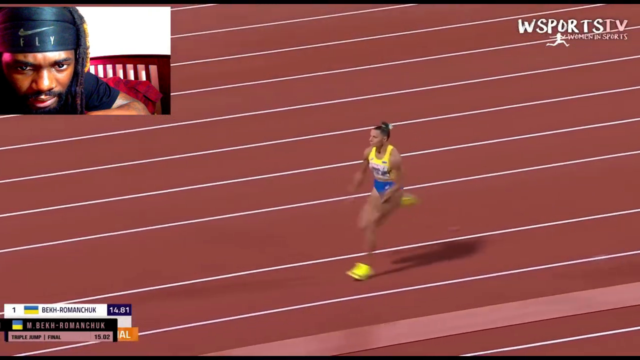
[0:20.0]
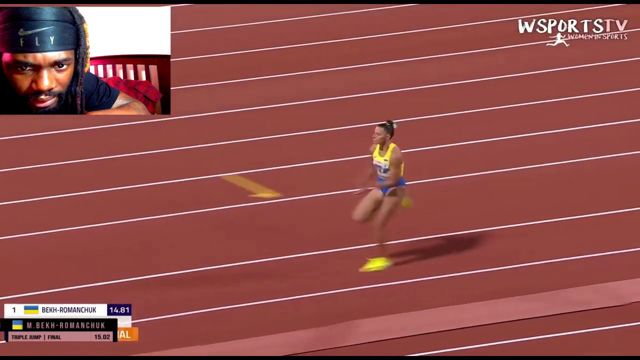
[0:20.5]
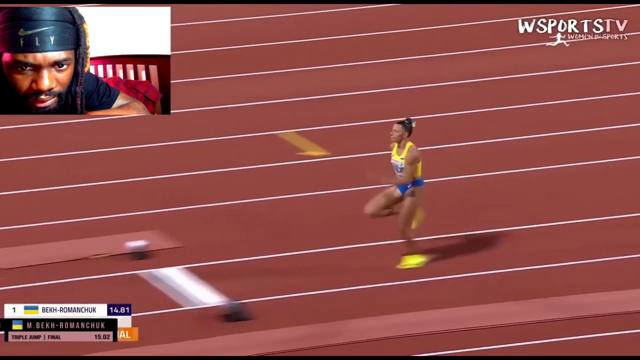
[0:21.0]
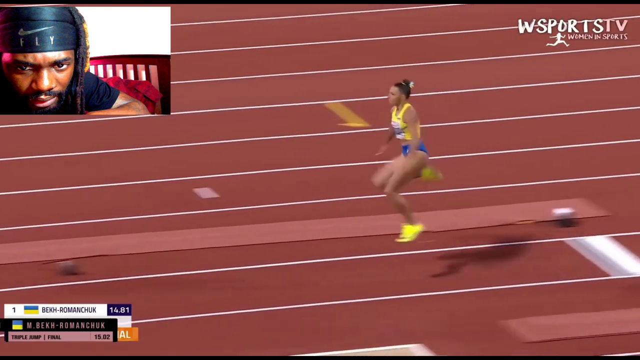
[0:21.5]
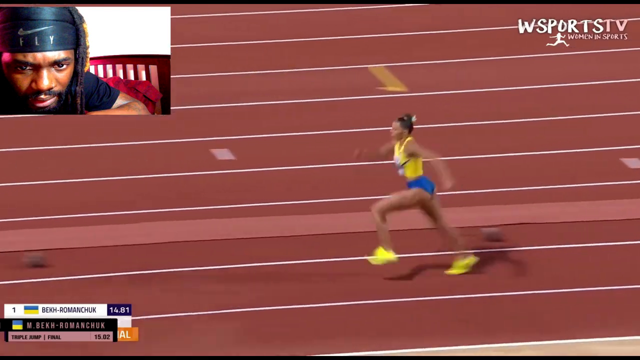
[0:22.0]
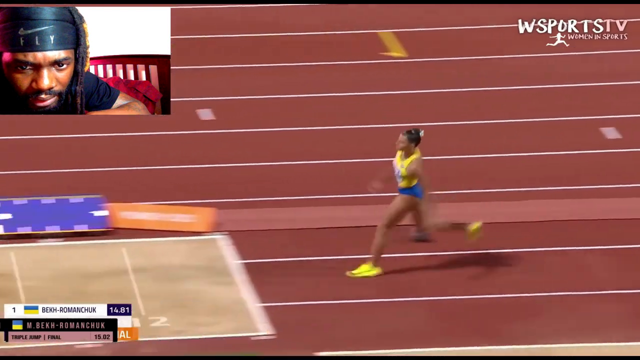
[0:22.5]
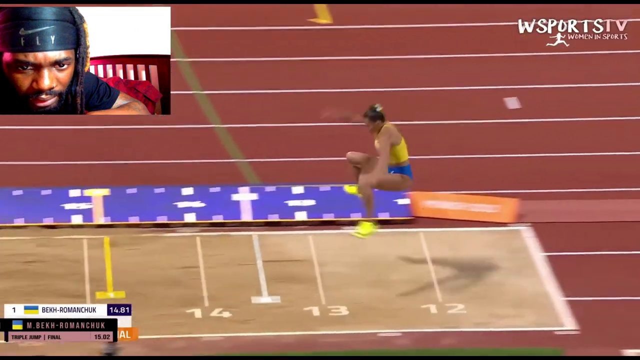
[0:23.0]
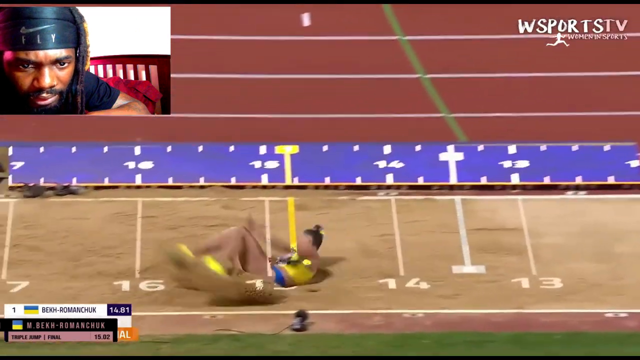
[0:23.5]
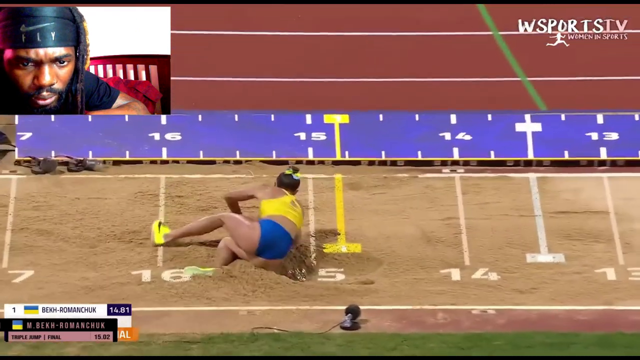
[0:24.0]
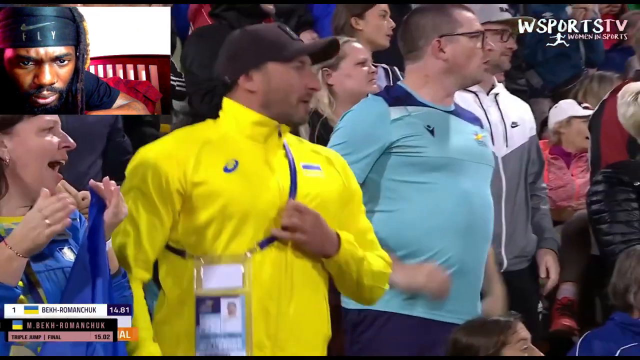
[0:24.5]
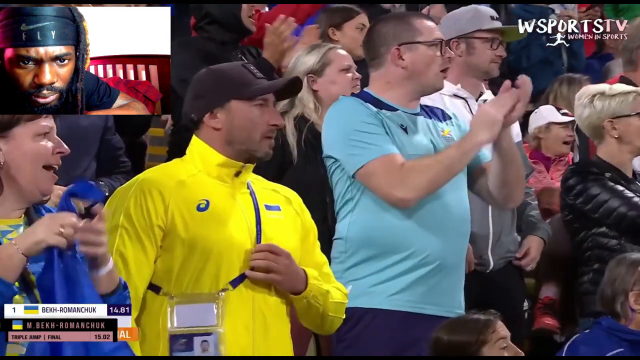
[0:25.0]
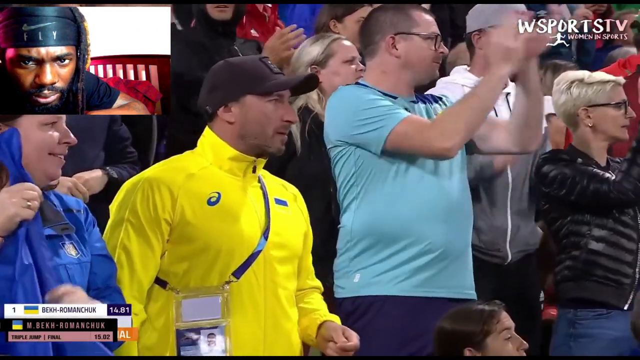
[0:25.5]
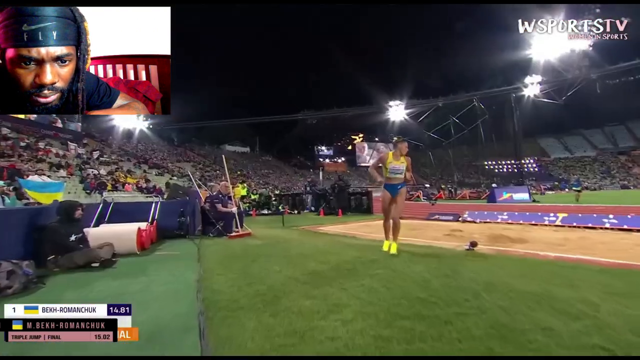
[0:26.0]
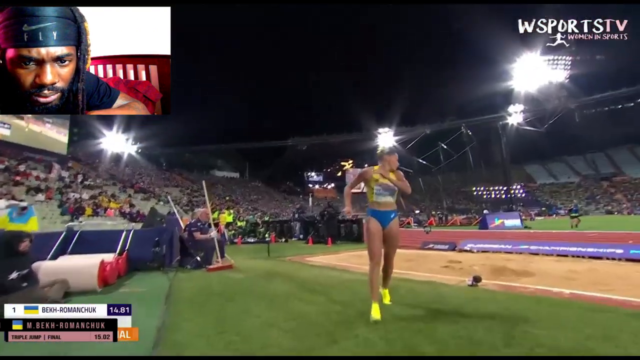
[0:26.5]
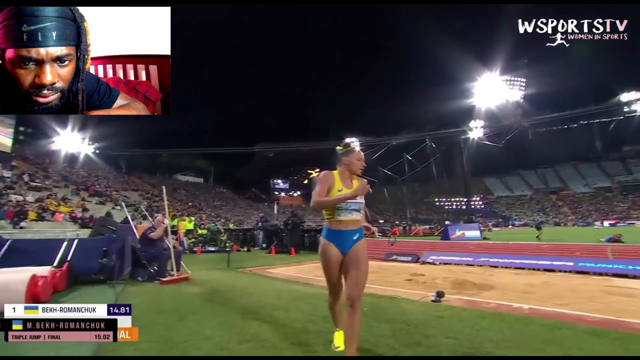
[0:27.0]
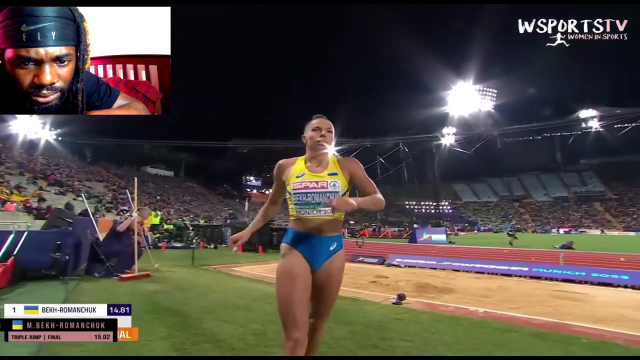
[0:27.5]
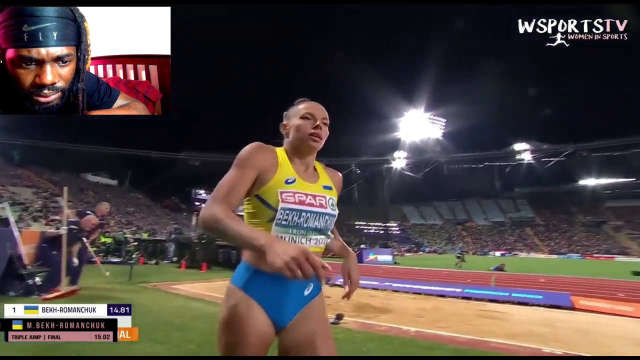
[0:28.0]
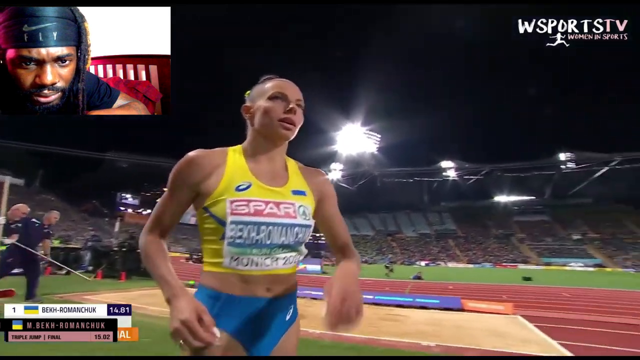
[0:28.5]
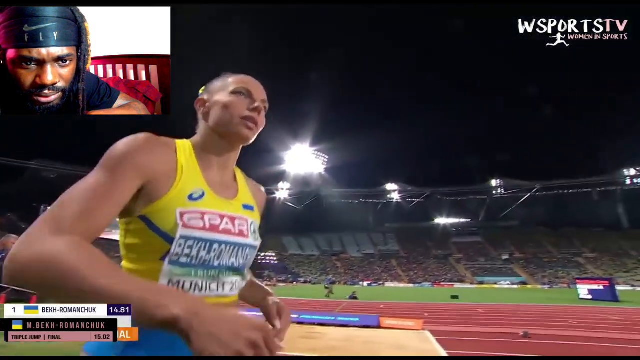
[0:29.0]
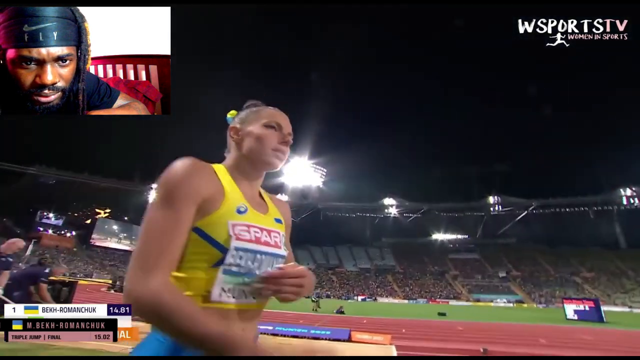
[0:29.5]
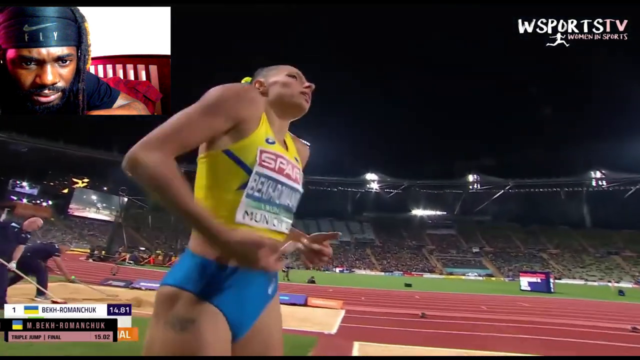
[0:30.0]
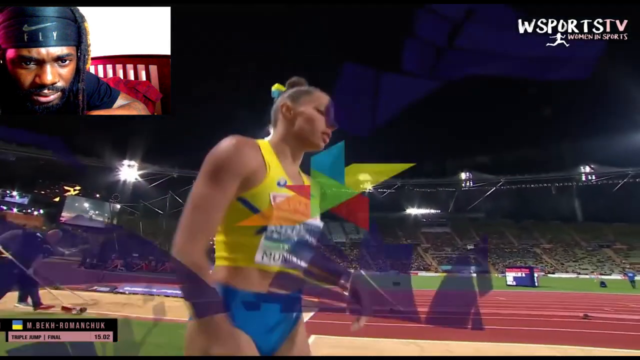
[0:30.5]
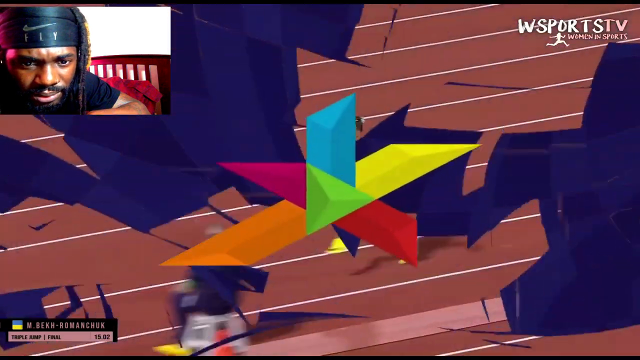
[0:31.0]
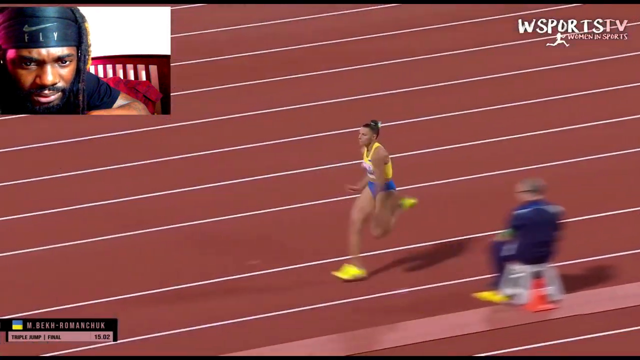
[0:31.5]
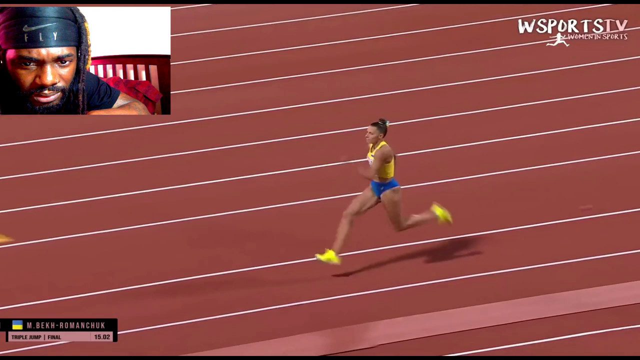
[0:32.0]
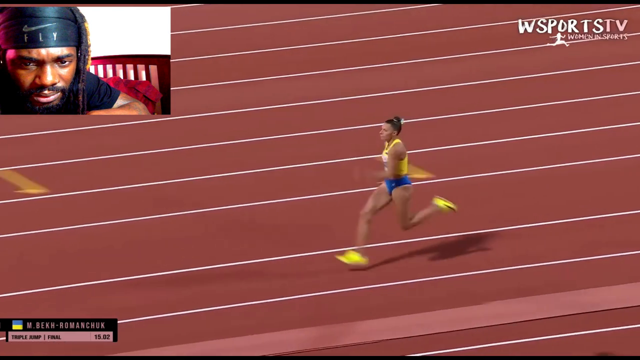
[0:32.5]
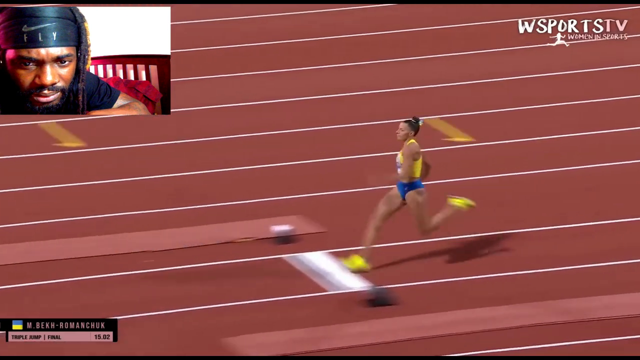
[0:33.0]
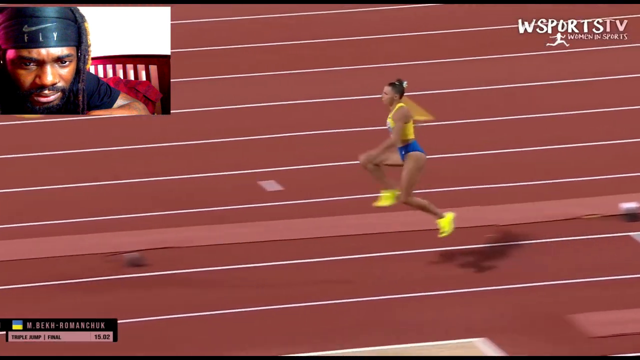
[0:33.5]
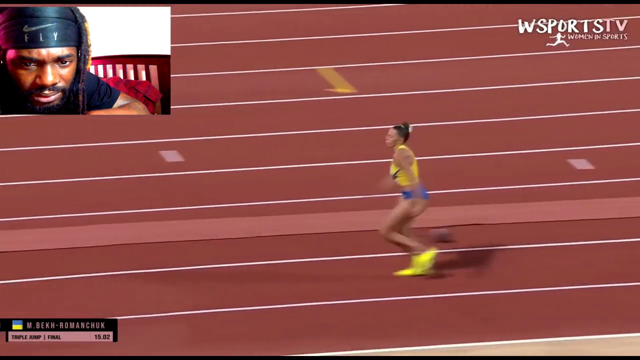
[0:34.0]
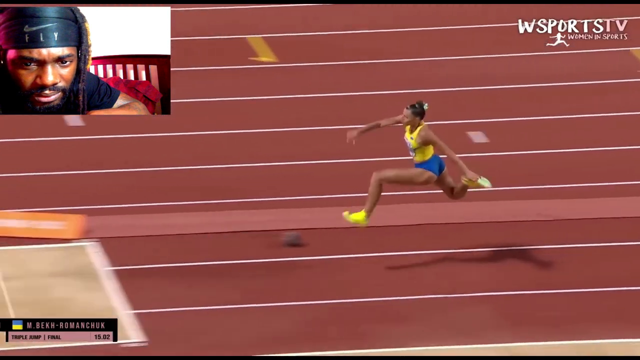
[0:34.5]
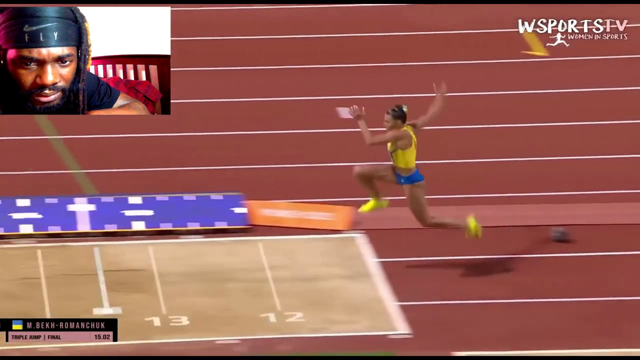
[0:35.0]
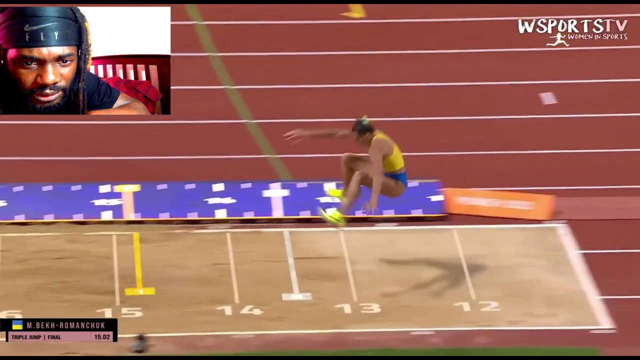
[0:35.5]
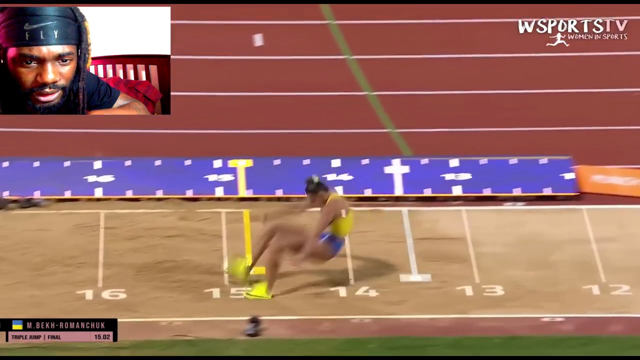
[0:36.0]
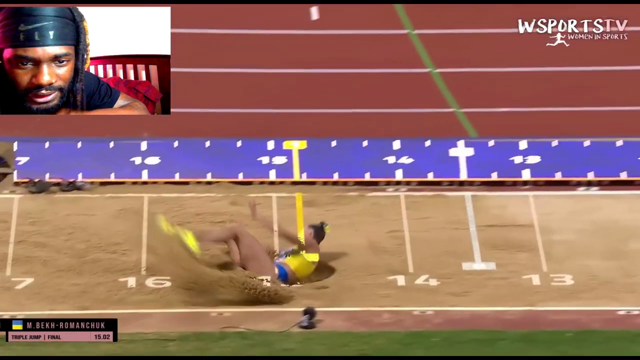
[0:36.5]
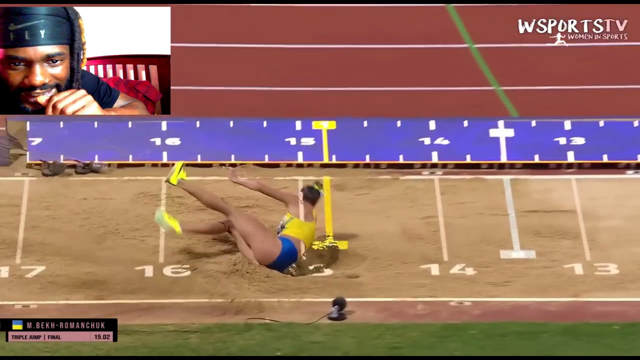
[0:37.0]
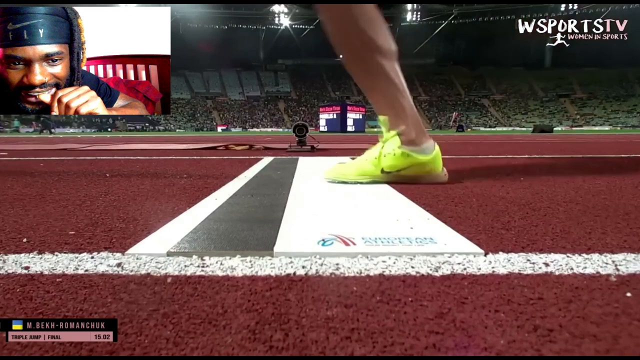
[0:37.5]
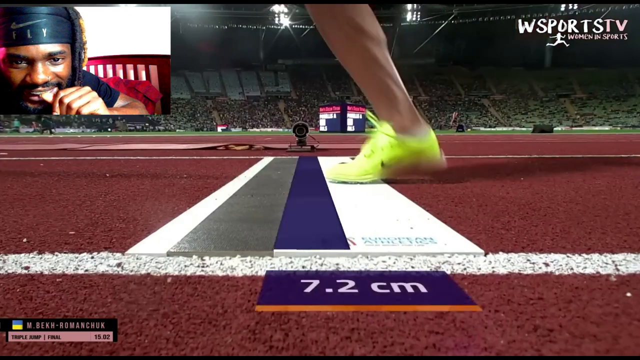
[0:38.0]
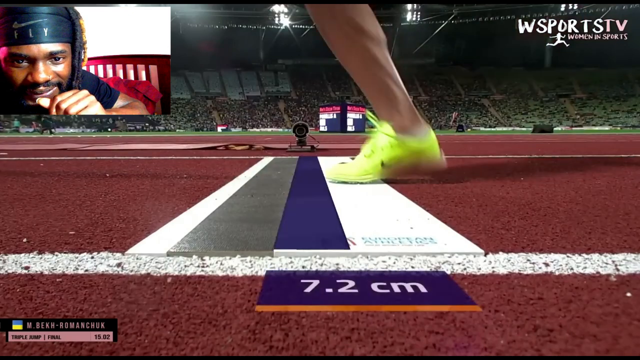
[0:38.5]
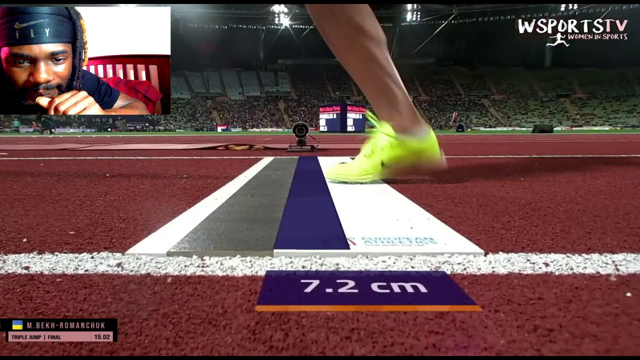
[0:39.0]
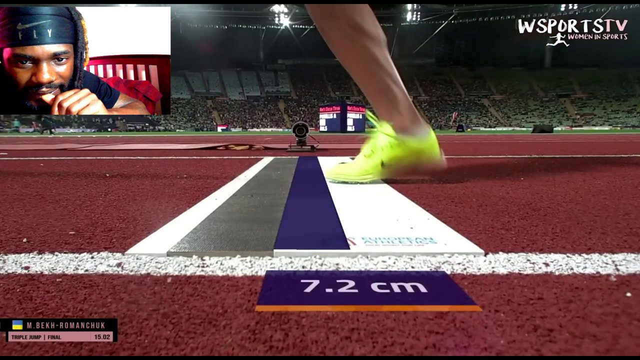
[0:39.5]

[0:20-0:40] The same woman continues her run, which turns out to look like a long jump type of event, apparently a triple jump. She seems to jump once, then jump again, and then jump into the sand. She appears to go past a line, possibly the mark needed for first place. At takeoff she stops basically right on the line she is supposed to jump from, timing the jump well. She lands in the sand. A green and yellow flag is visible, which suggests she may be from Brazil. She looks pretty satisfied but also very tired.